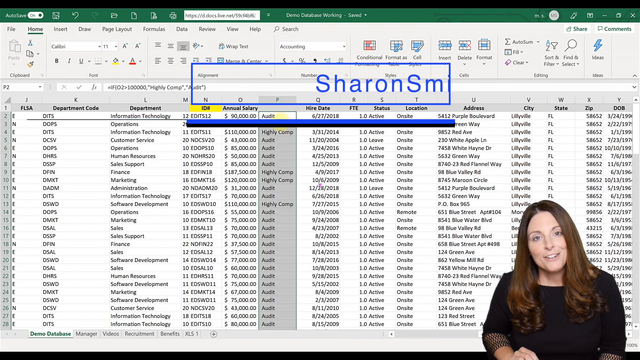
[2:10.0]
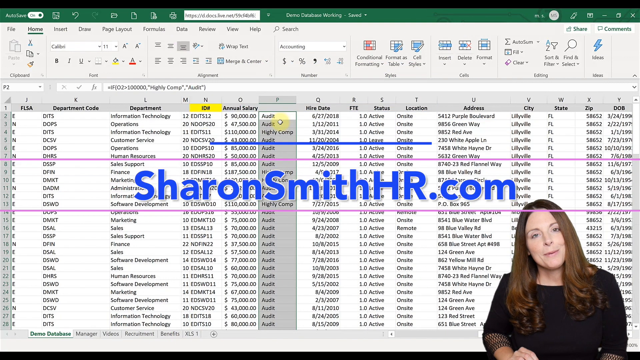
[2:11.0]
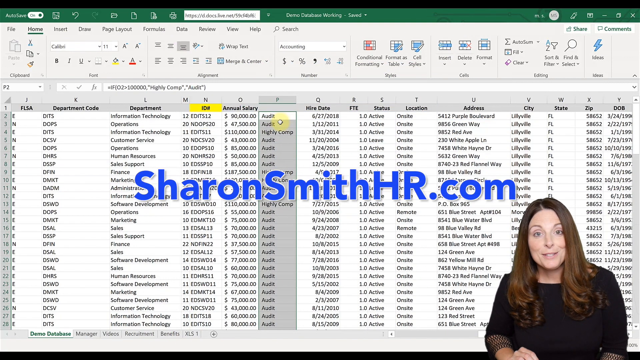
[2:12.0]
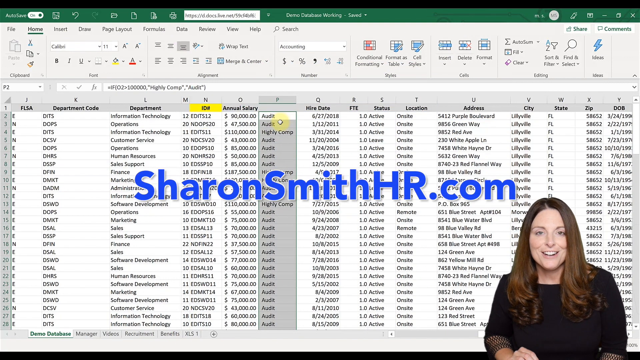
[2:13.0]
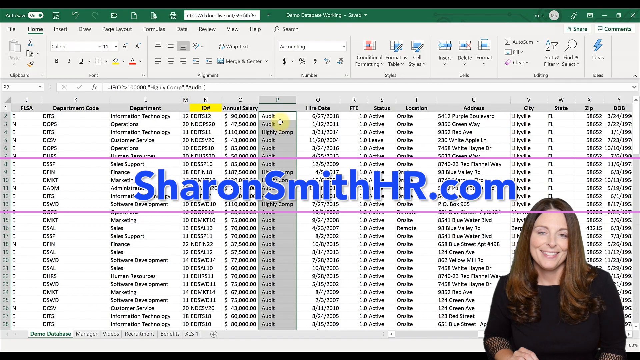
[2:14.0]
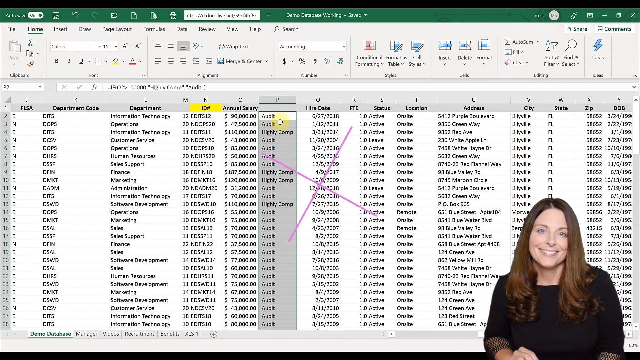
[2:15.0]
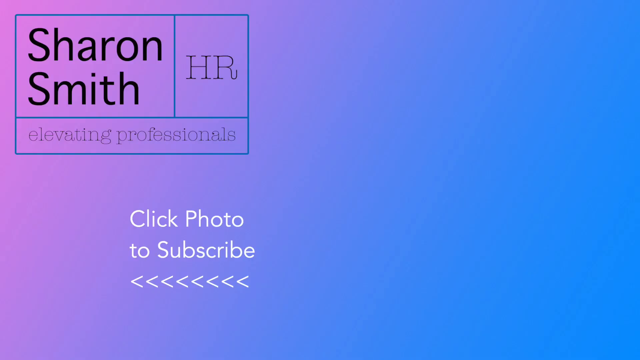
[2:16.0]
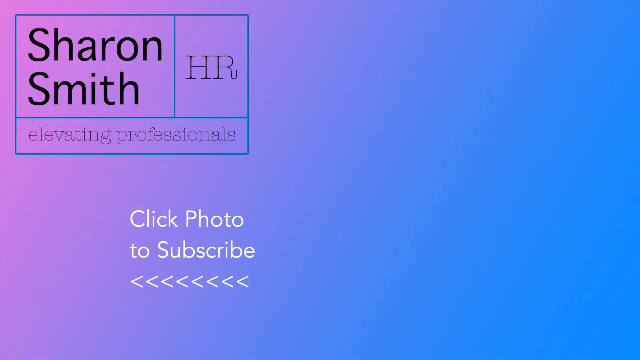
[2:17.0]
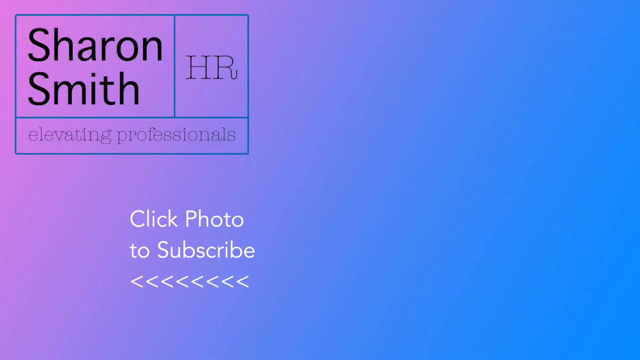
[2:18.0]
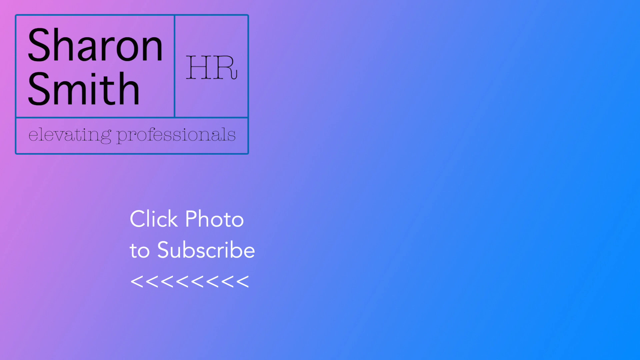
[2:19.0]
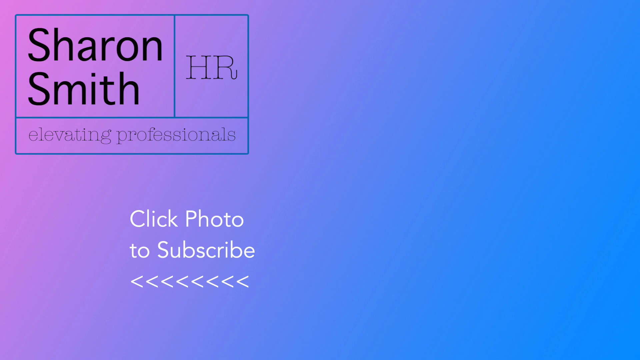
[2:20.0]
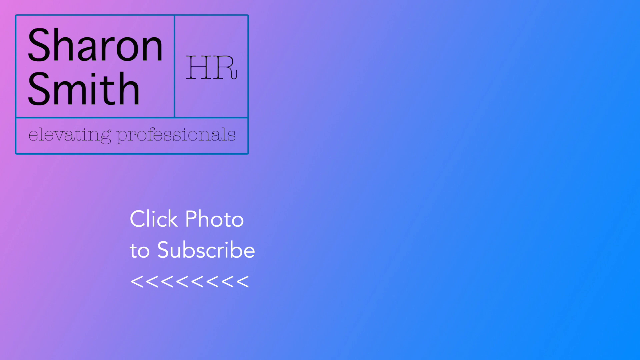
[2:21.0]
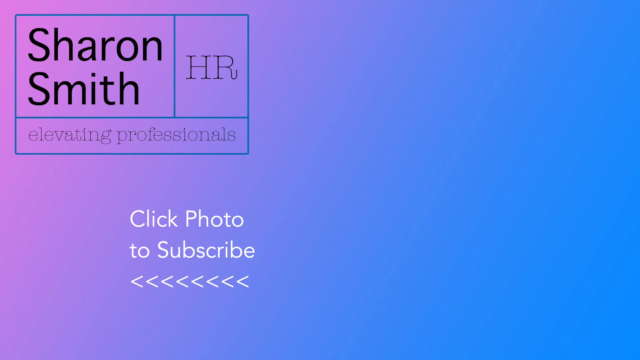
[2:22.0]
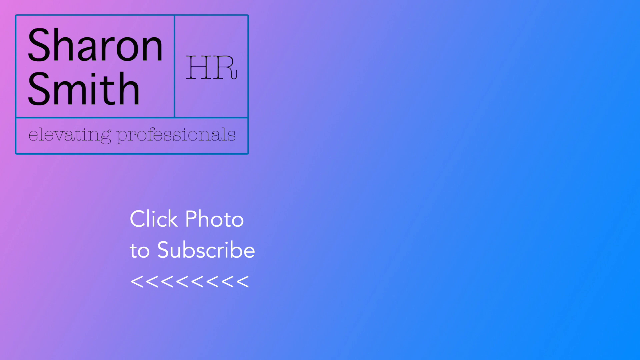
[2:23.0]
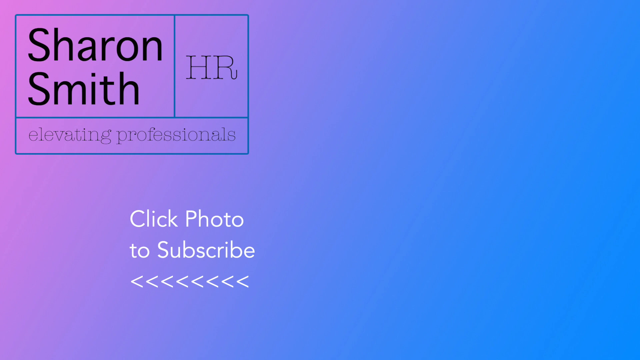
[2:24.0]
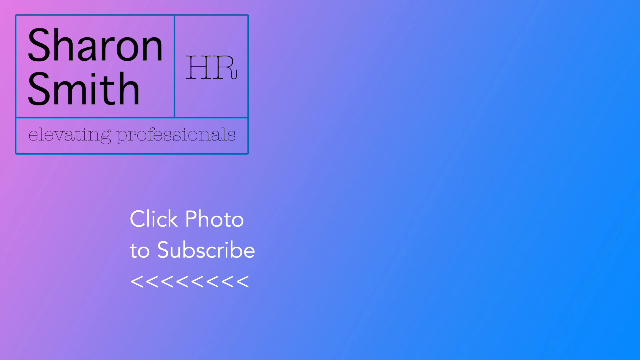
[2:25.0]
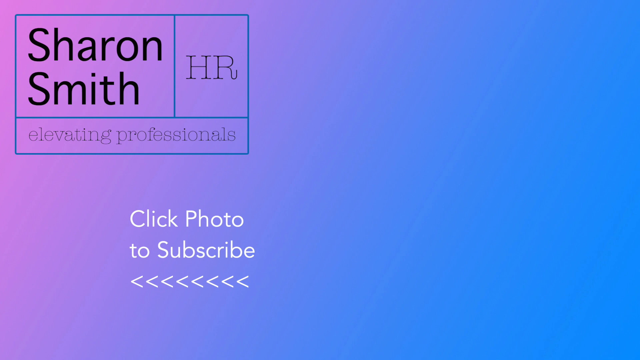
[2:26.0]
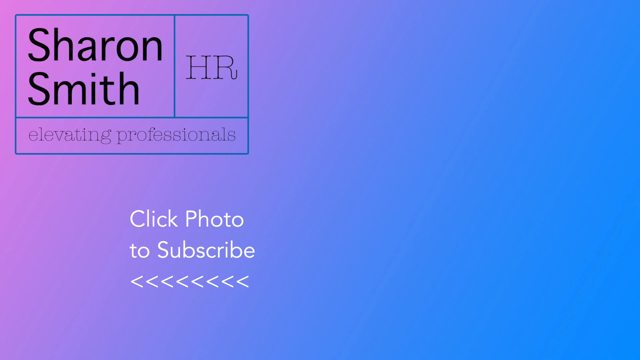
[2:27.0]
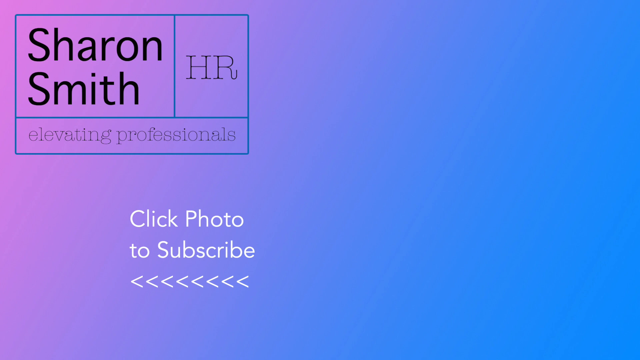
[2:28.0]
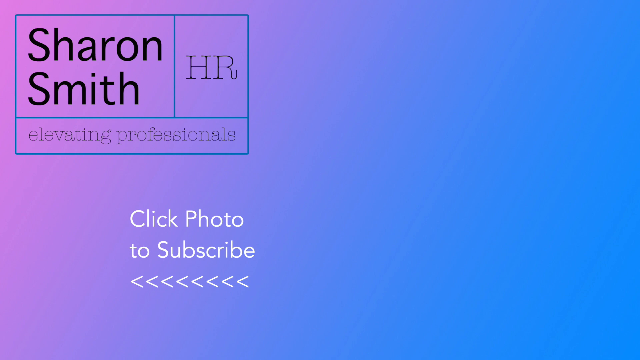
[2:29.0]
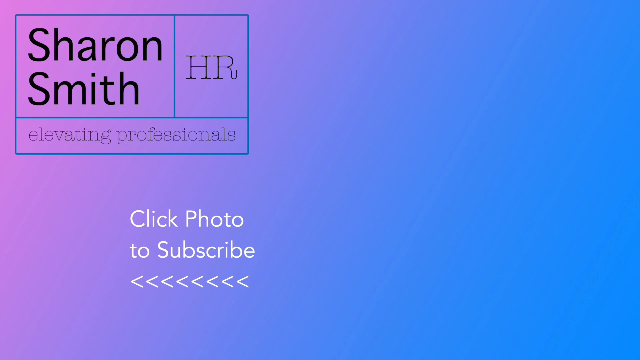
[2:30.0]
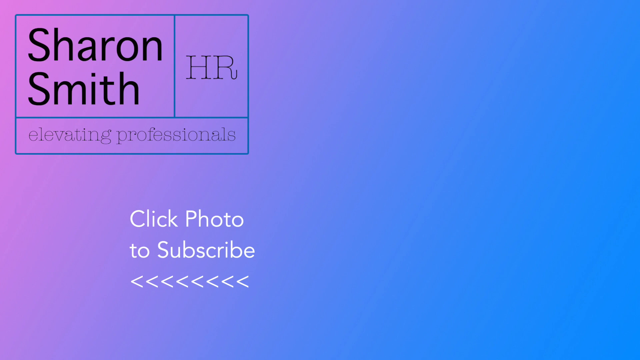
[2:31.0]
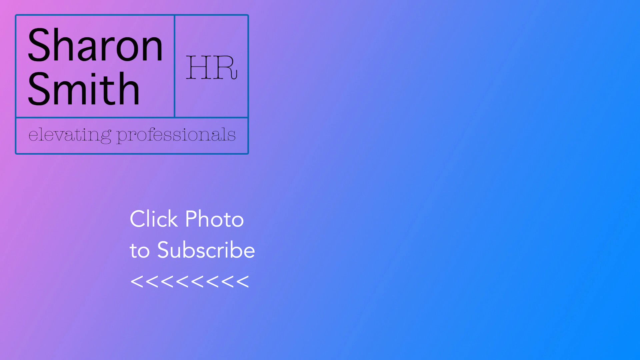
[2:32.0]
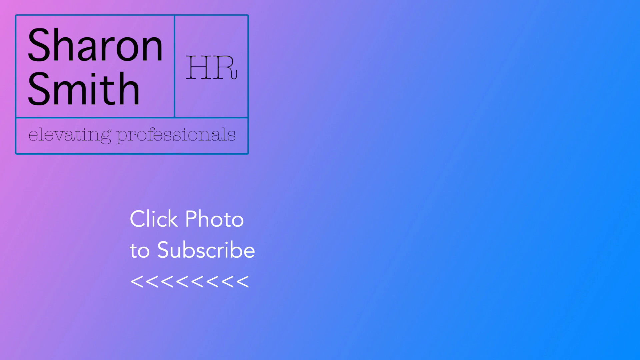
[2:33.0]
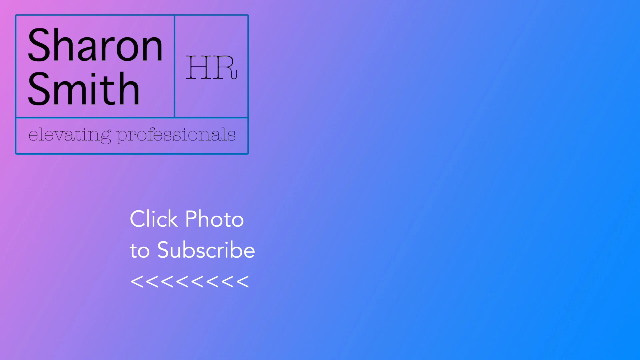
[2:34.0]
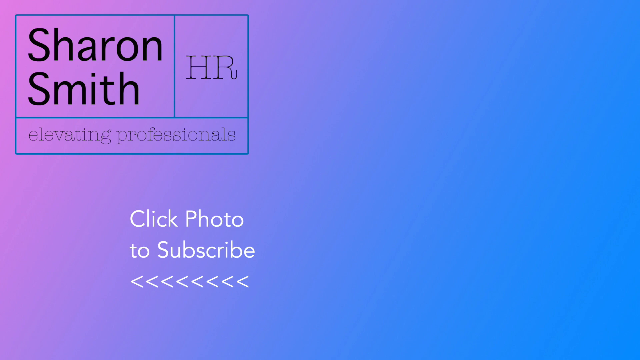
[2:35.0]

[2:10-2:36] A spreadsheet is in the background with a woman on the right talking to the camera; she is Caucasian, in her upper 20s, with brown hair and a black shirt. Around 28 rows are visible, and the columns run from J through Y. Column J is titled "FLSA", K "Department Code", L "Department", N "ID Number", and O "Annual Salary". Column P is highlighted and alternates between "Audit" and "Highly Comp" for the various people. Column Q says "Hire Date", followed by columns for location, address, city, state, zip, and date of birth of employees. Overlaid at the top center, her website "SharonSmithHR.com" appears in blue. The screen then turns blue and purple, showing "Sharon Smith HR Elevating Professionals" and "Click photo to subscribe" with an arrow pointing to the left.